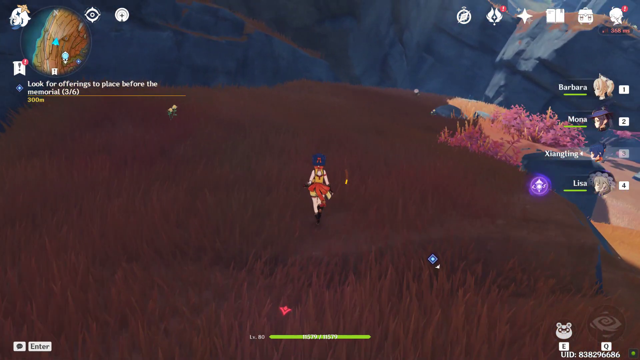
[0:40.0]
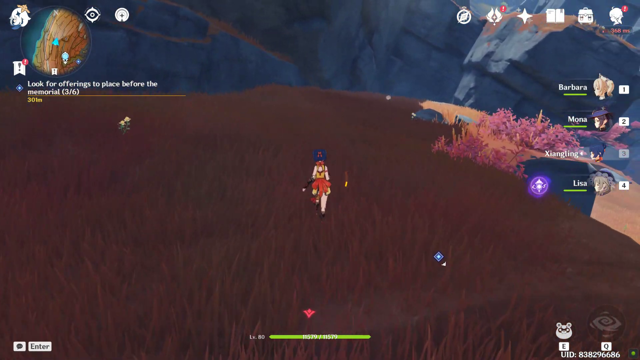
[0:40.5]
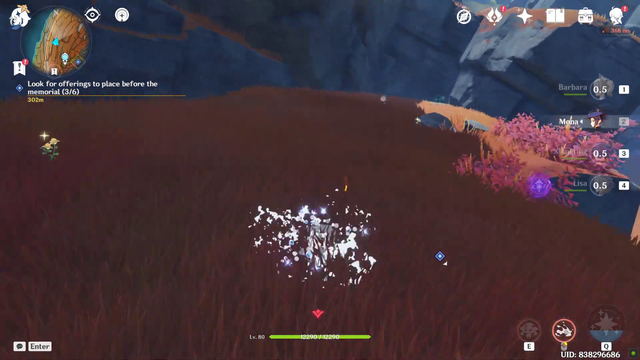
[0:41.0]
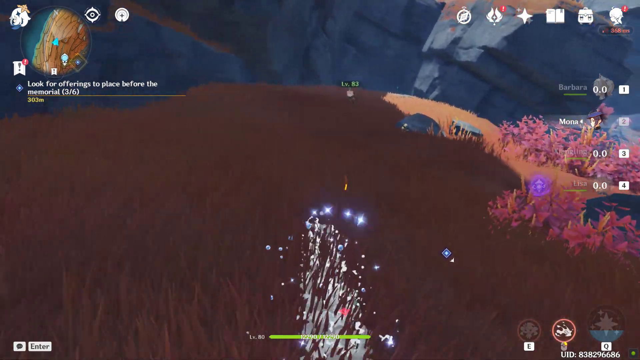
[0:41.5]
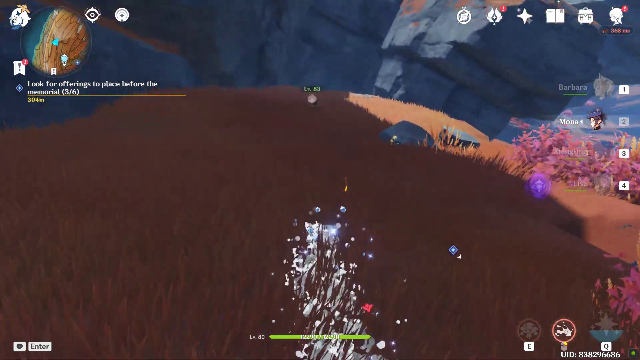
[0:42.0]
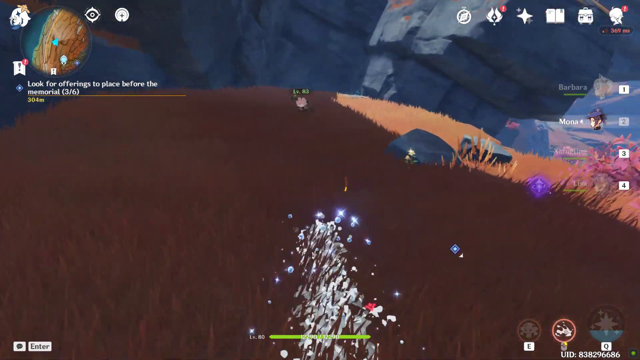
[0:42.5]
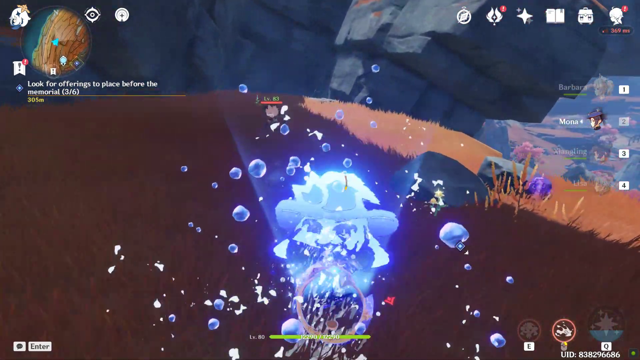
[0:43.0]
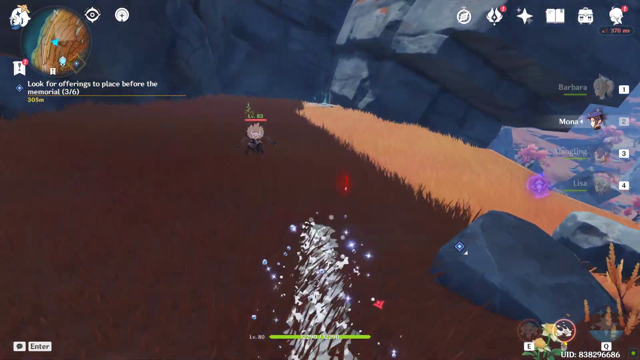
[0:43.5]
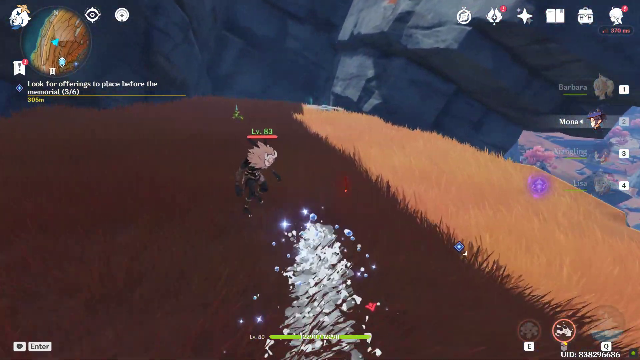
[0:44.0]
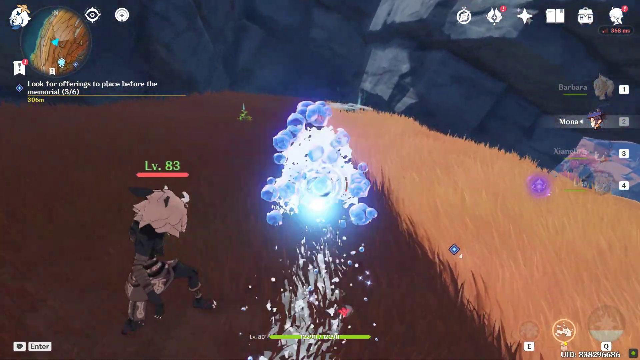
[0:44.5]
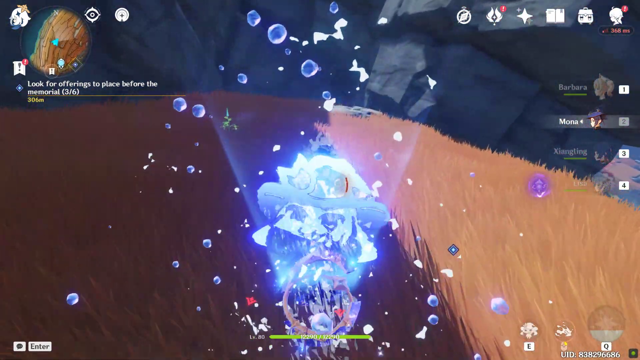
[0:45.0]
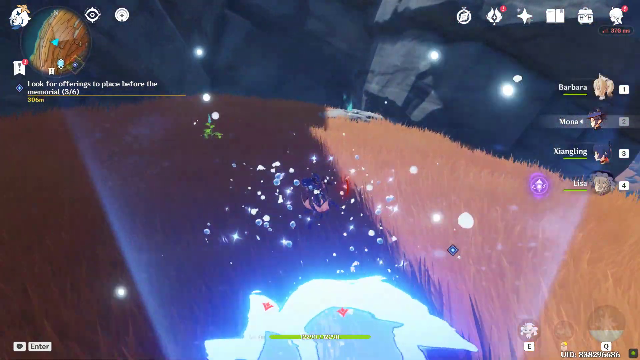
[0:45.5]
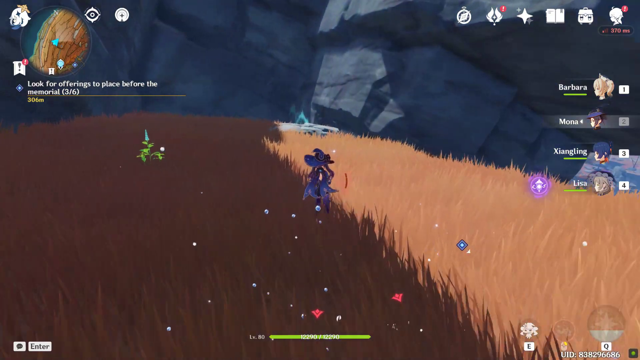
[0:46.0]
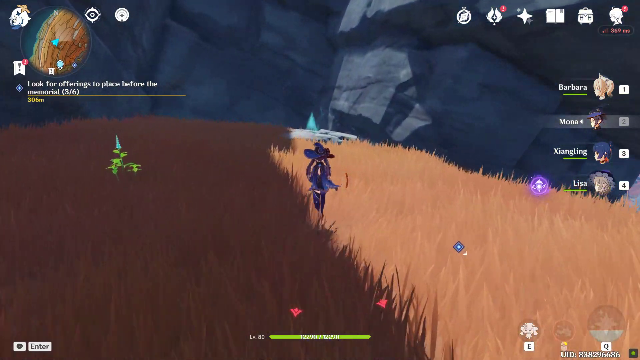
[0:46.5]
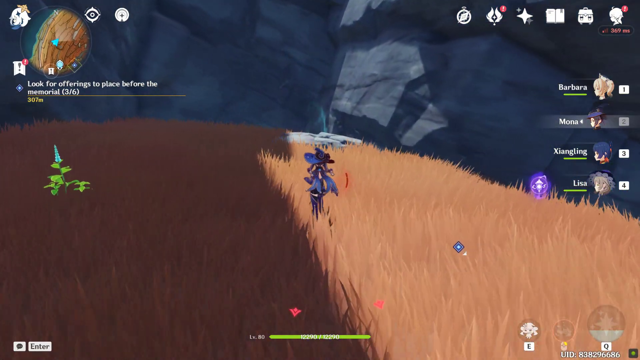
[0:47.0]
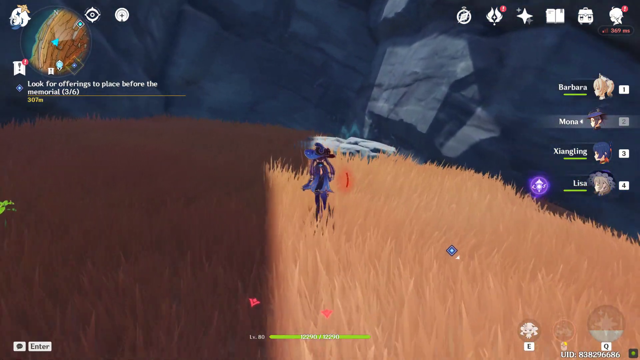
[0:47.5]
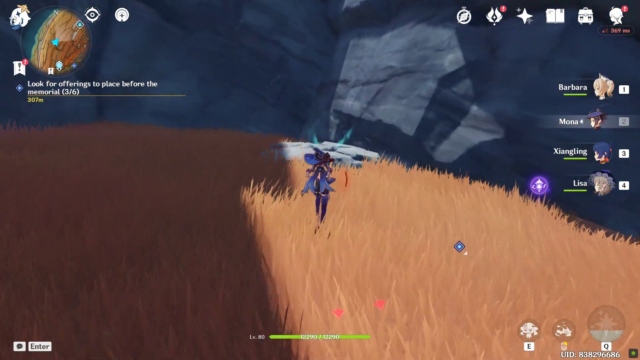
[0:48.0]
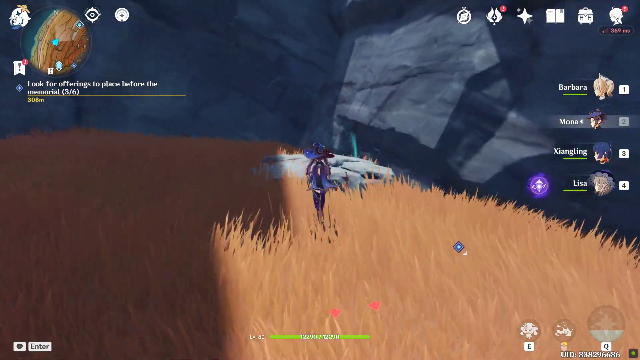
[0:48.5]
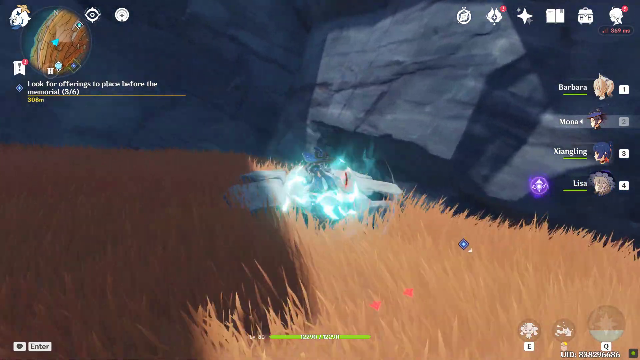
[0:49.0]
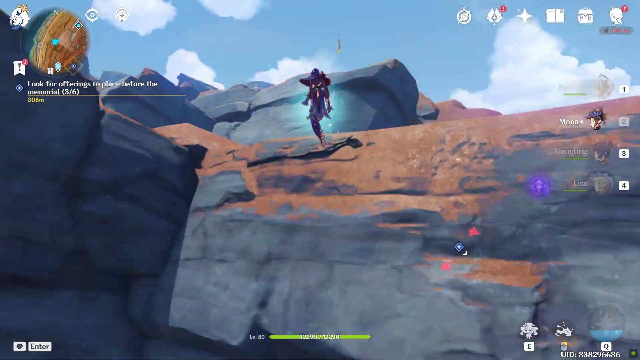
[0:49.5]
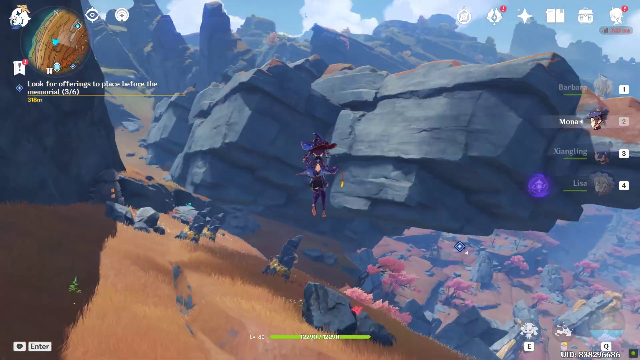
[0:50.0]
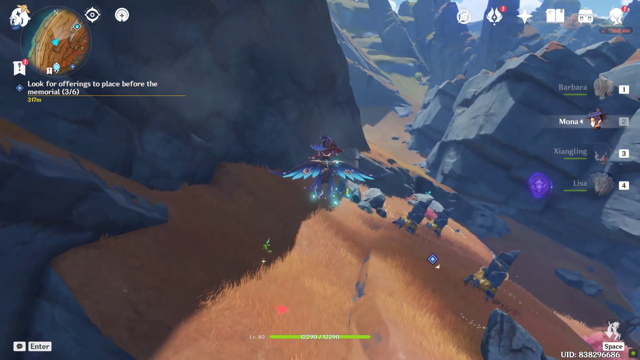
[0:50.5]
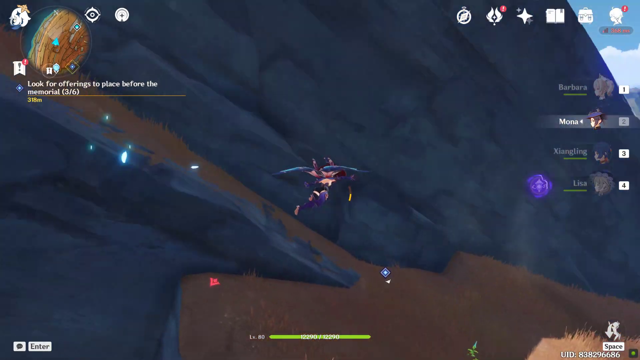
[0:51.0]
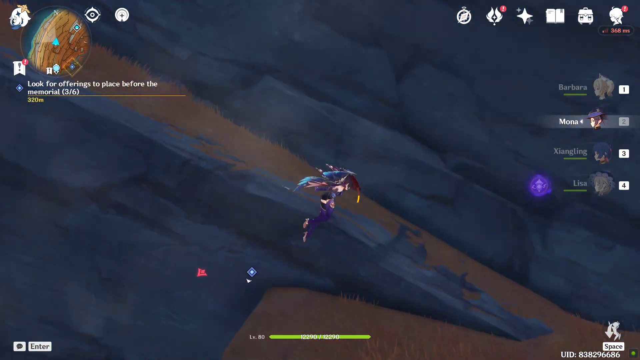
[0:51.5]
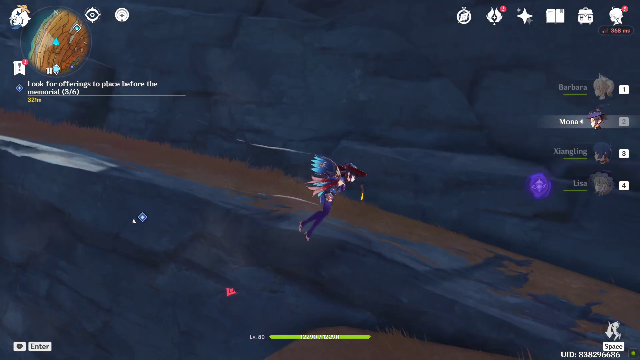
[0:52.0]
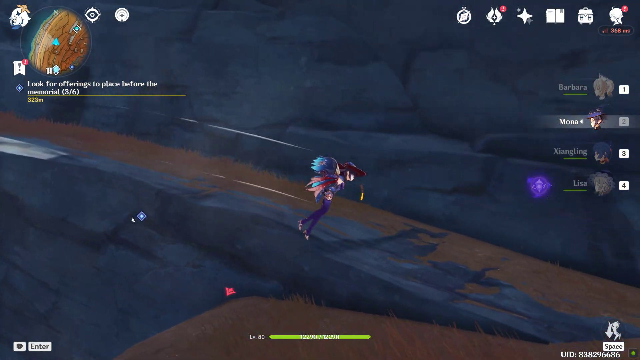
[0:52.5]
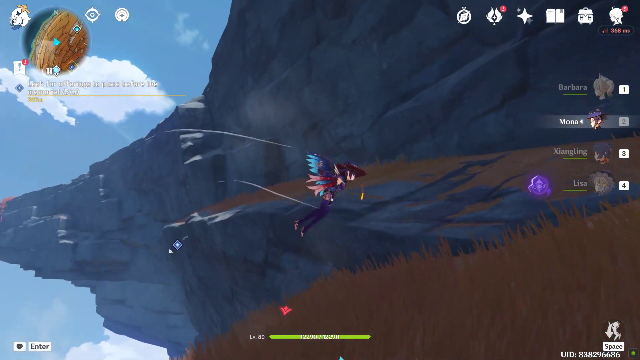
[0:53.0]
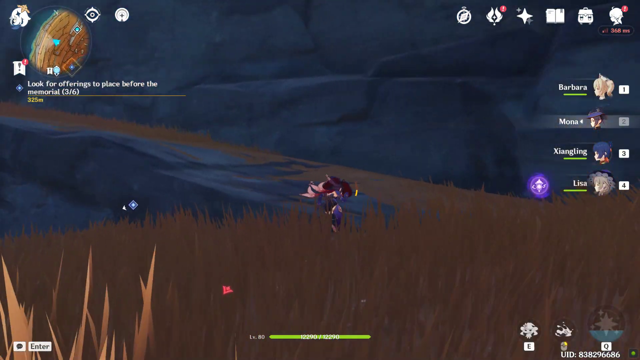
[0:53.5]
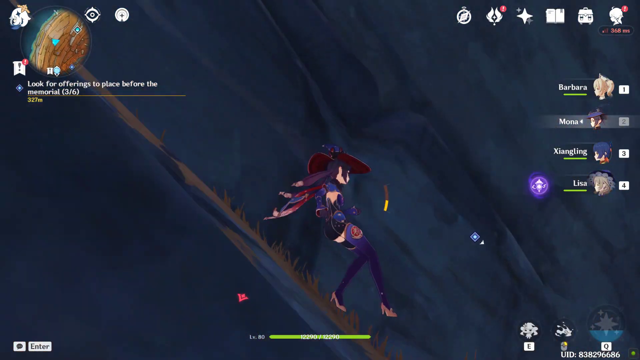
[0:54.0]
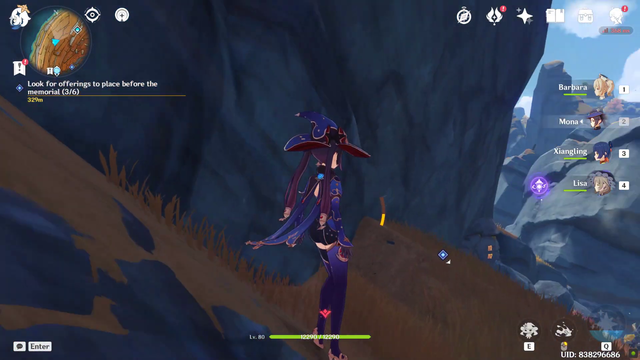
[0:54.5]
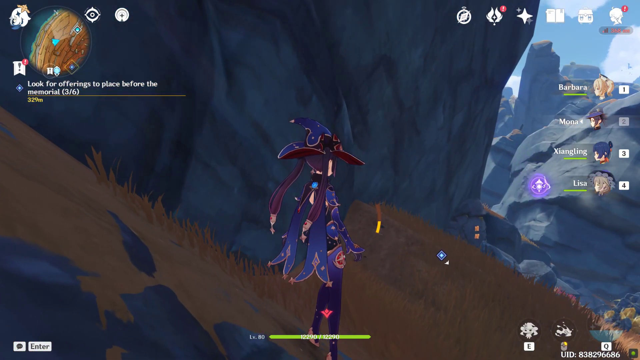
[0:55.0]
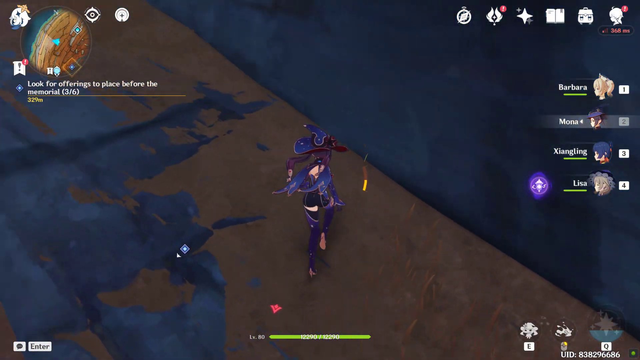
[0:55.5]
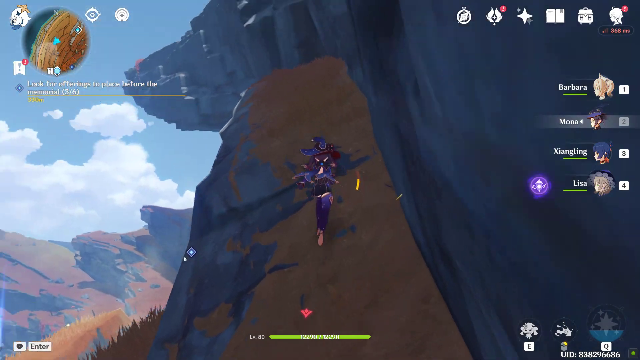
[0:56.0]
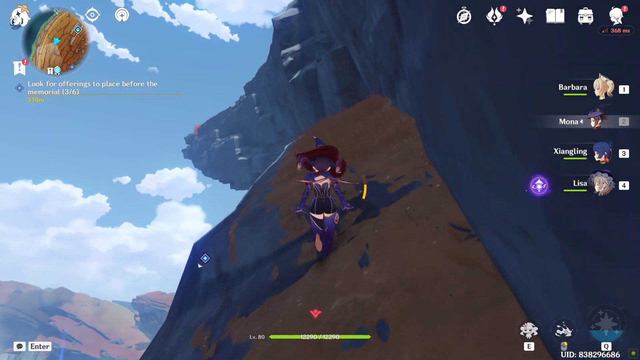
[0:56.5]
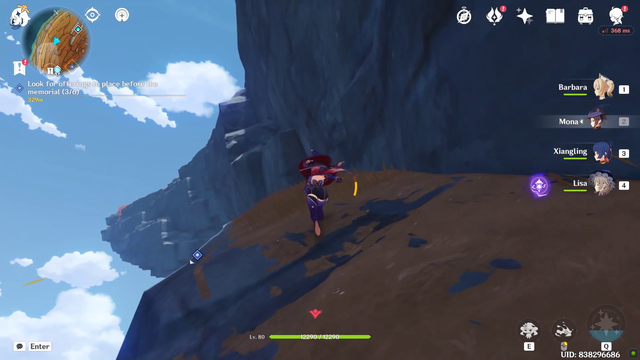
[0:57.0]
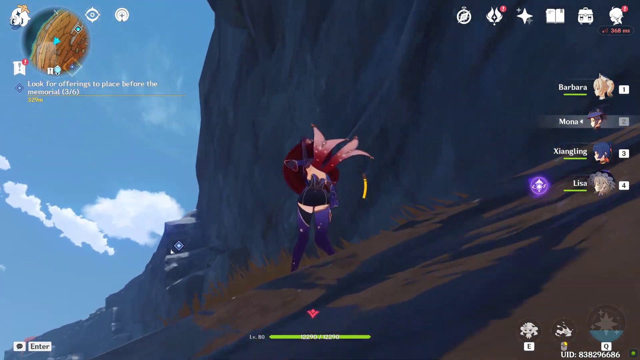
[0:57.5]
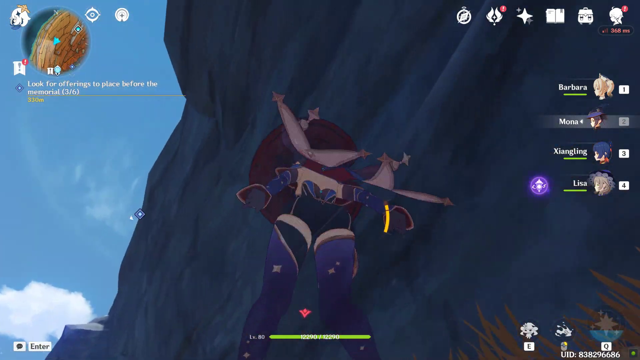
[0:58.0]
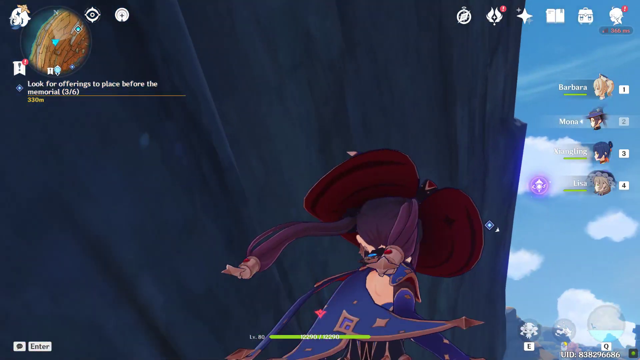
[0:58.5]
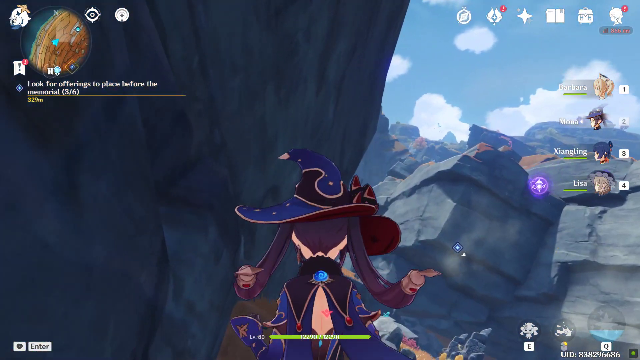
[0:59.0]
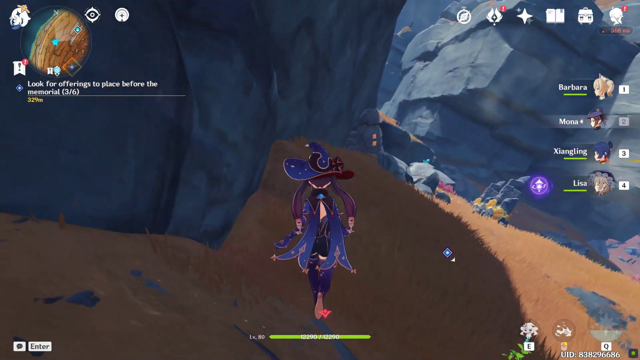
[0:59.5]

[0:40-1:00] The character continues, then disintegrates and appears to go underground. As she moves underground, white stripes on the surface indicate where she is moving. She passes a character who has a red stripe above his head, and green text reads "LV.83". A shiny, bubbly light cloud forms as she moves. When she pops back above ground, her outfit has changed: she now wears long purple socks that reach midway up her thighs, her wings are now blue, and the outfit looks more like a wizard's, with a hat that looks like a witch's hat and a cape, all in a purple-blue colour. She still wears the black hot pants.